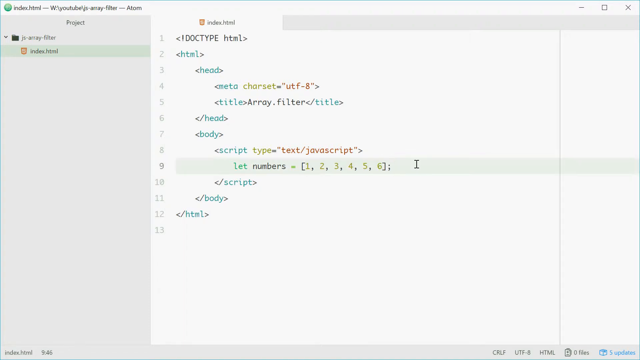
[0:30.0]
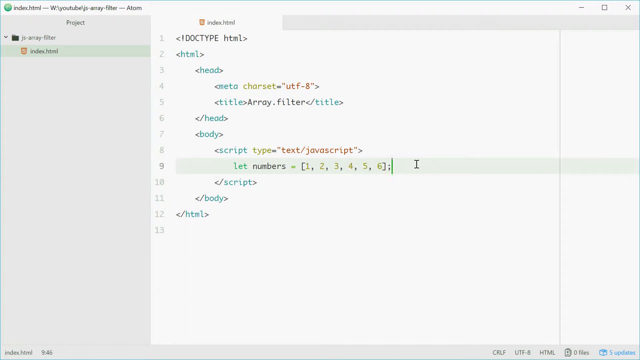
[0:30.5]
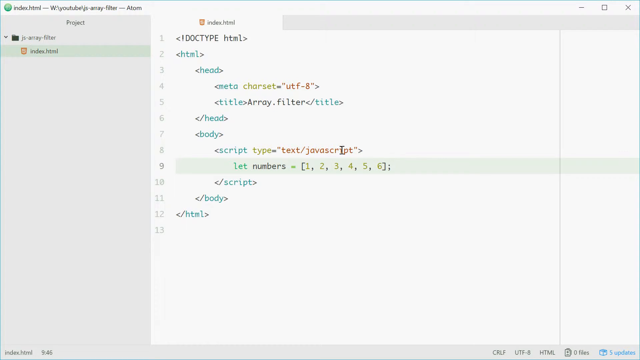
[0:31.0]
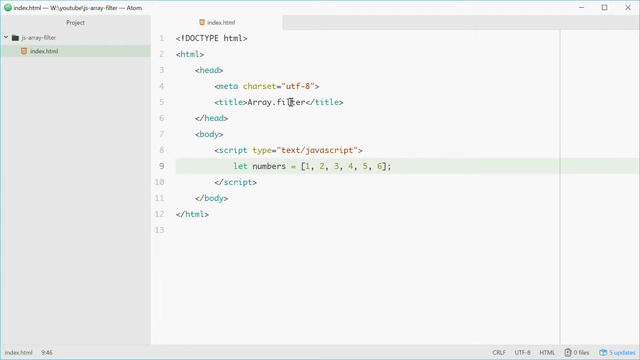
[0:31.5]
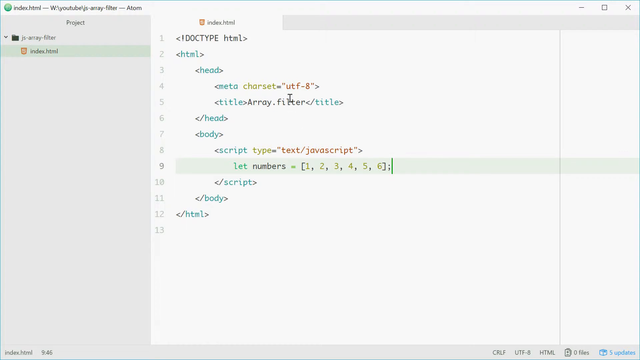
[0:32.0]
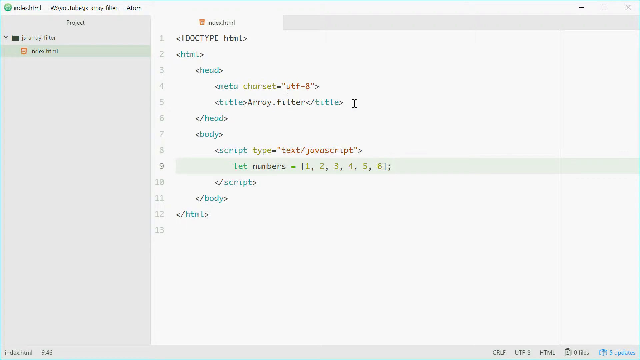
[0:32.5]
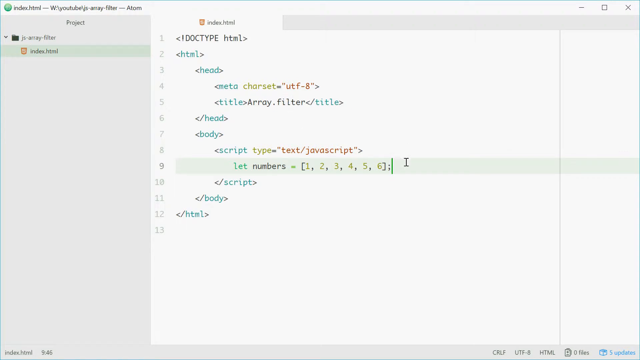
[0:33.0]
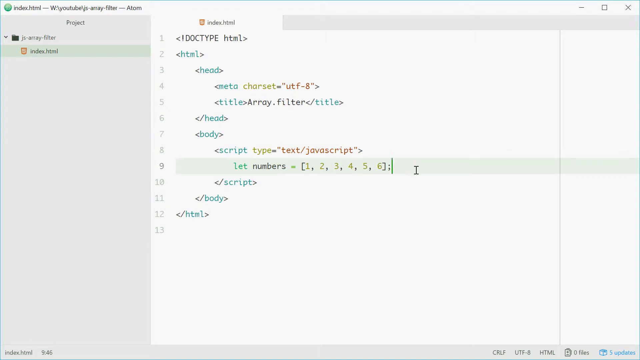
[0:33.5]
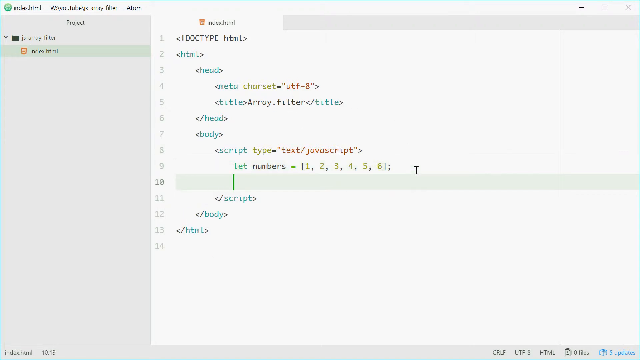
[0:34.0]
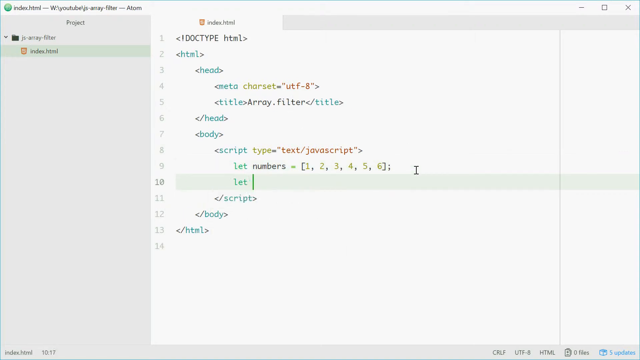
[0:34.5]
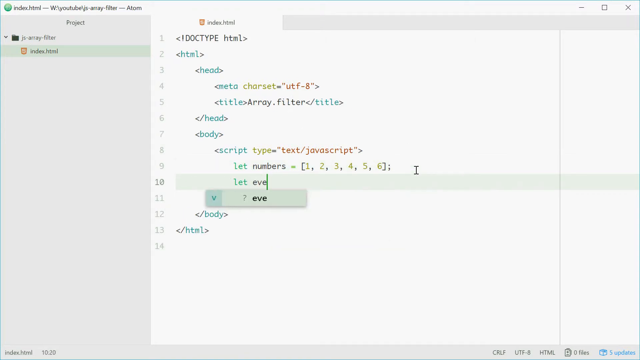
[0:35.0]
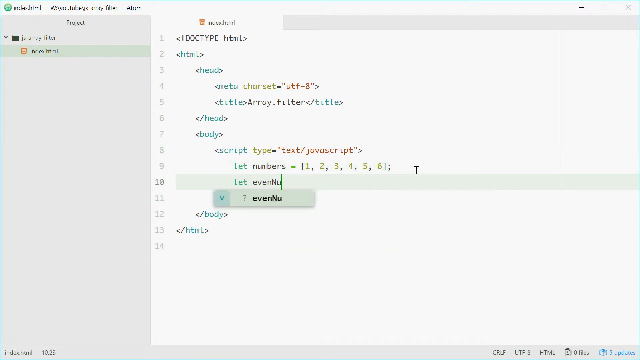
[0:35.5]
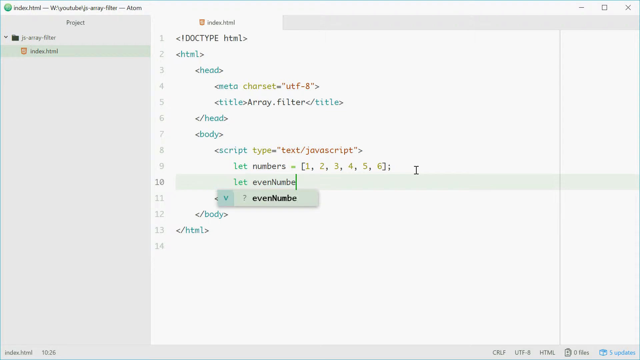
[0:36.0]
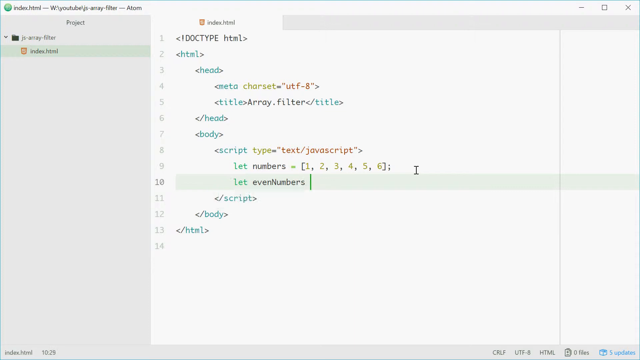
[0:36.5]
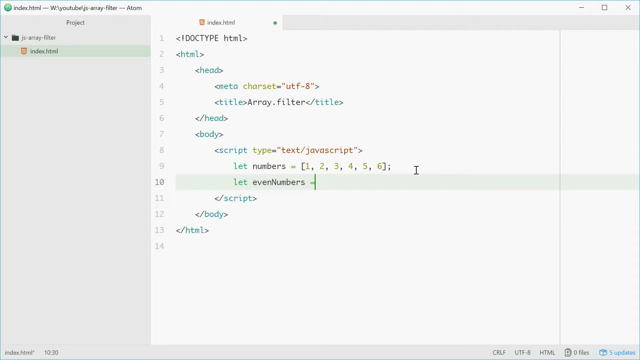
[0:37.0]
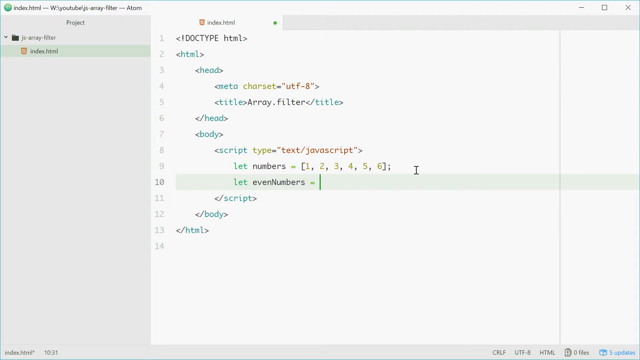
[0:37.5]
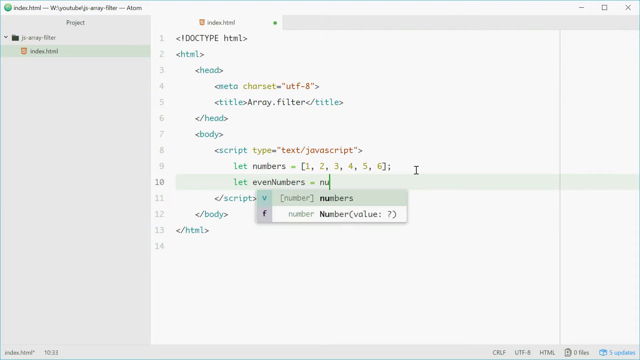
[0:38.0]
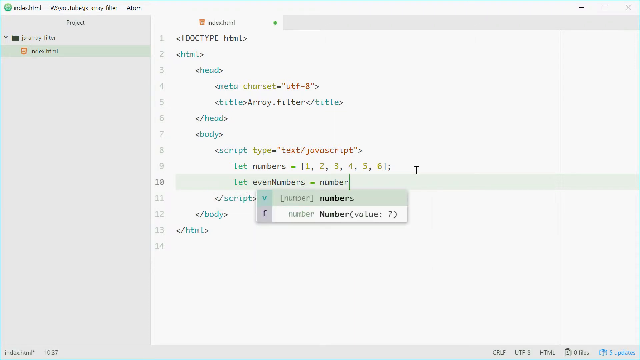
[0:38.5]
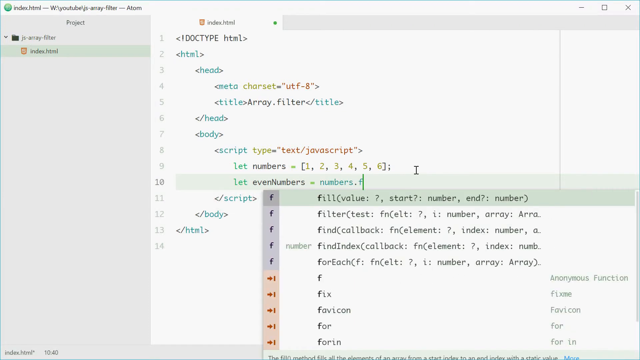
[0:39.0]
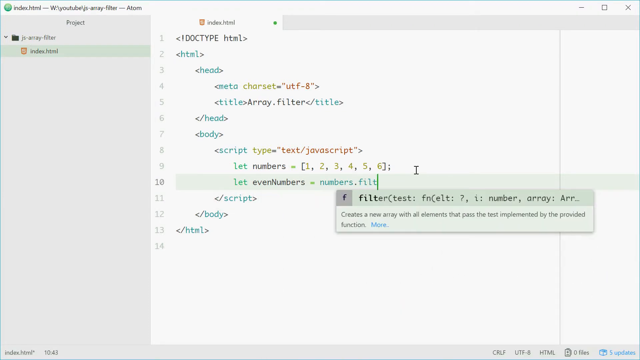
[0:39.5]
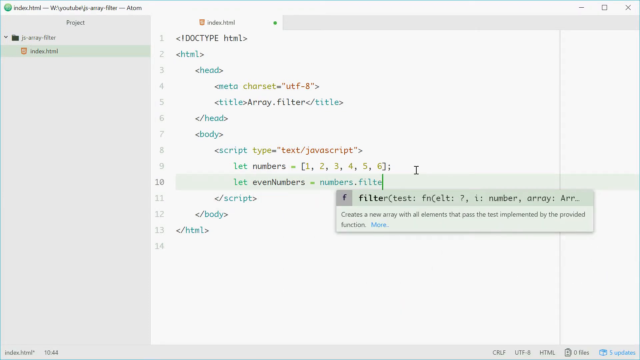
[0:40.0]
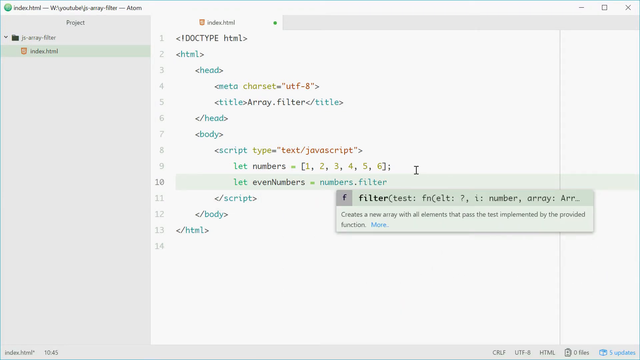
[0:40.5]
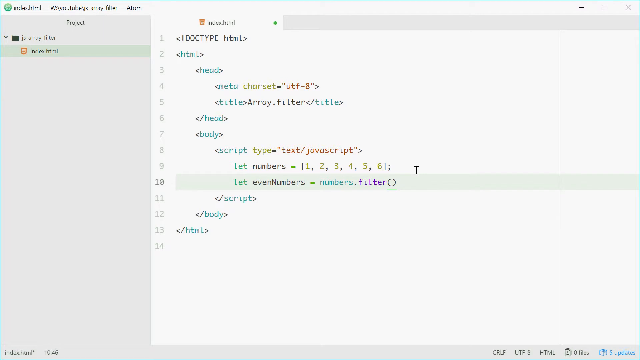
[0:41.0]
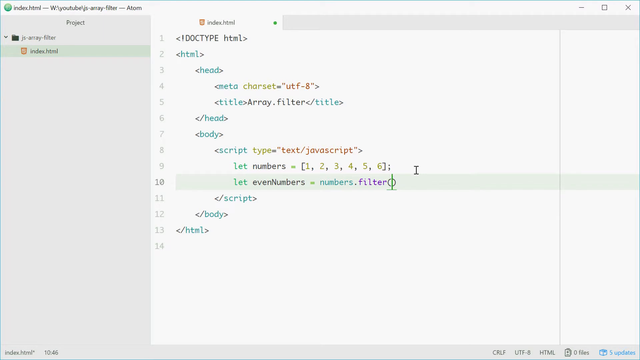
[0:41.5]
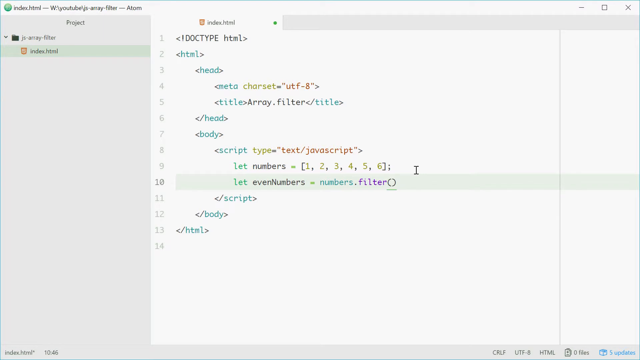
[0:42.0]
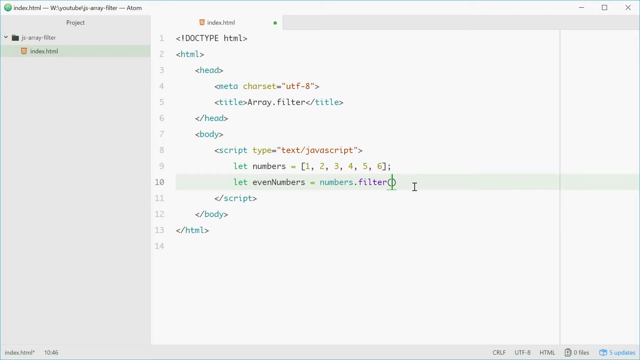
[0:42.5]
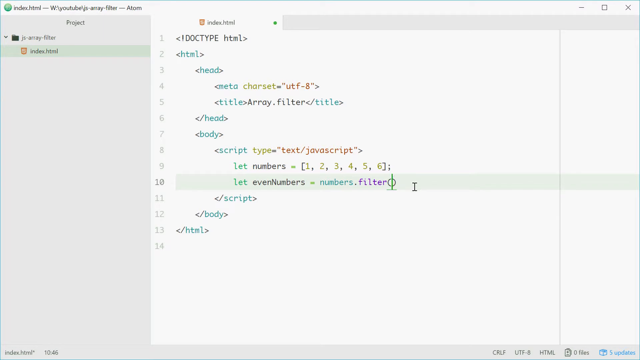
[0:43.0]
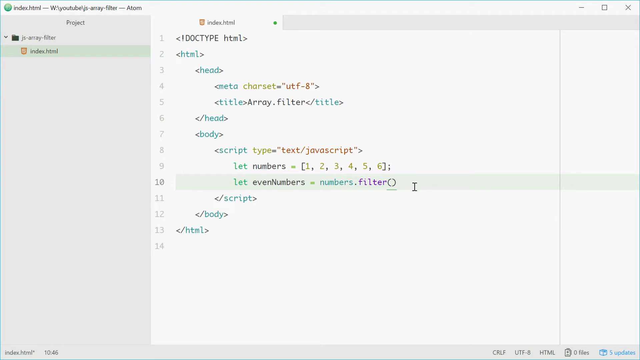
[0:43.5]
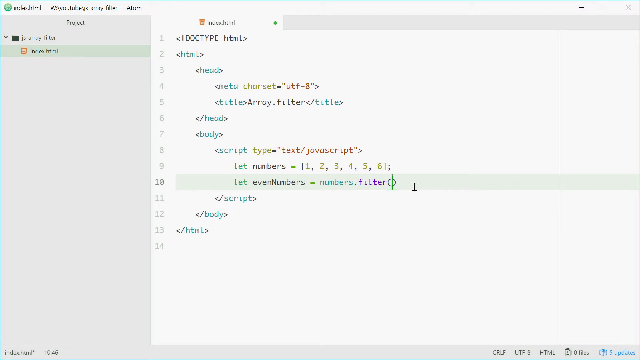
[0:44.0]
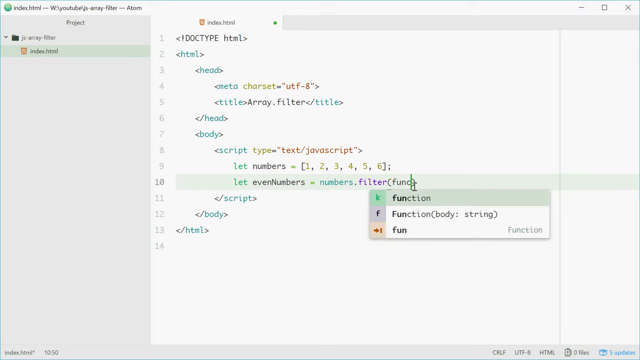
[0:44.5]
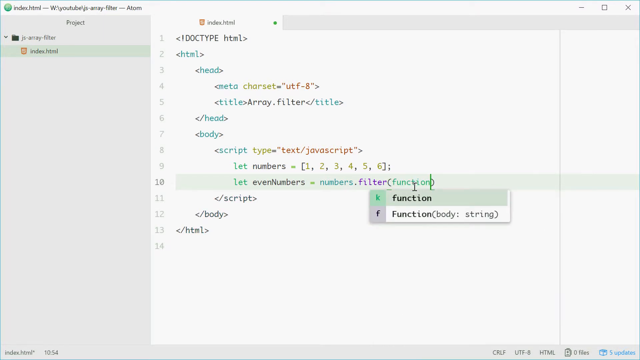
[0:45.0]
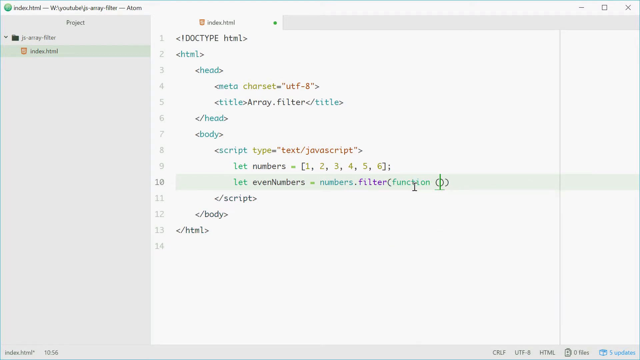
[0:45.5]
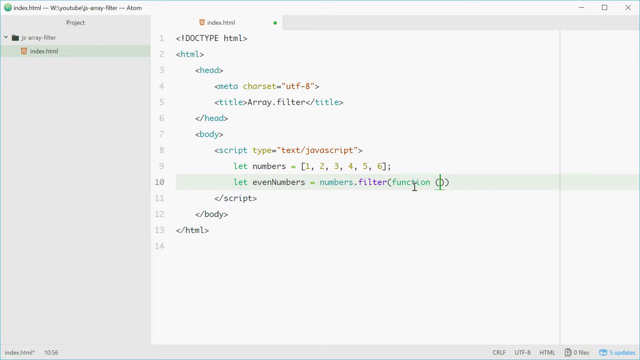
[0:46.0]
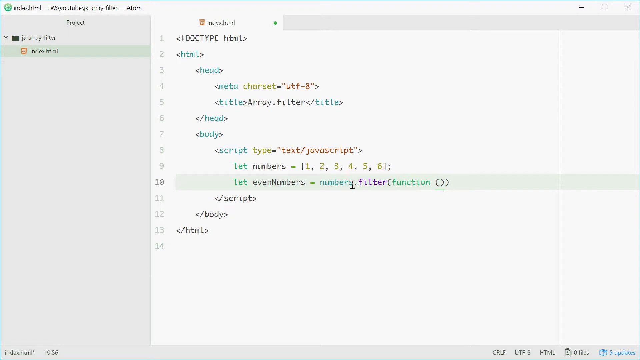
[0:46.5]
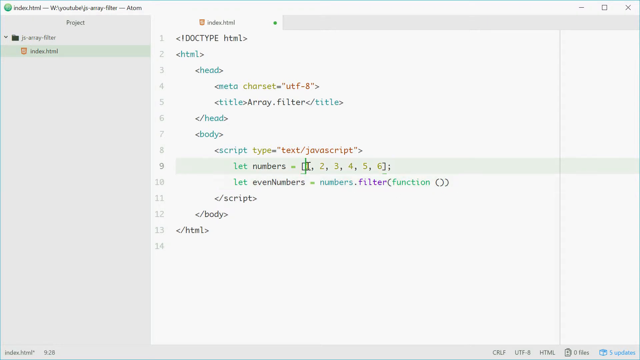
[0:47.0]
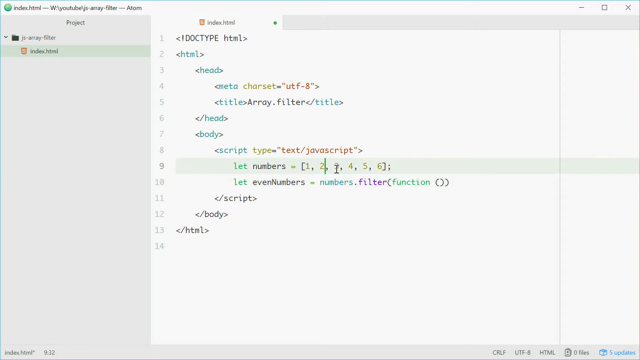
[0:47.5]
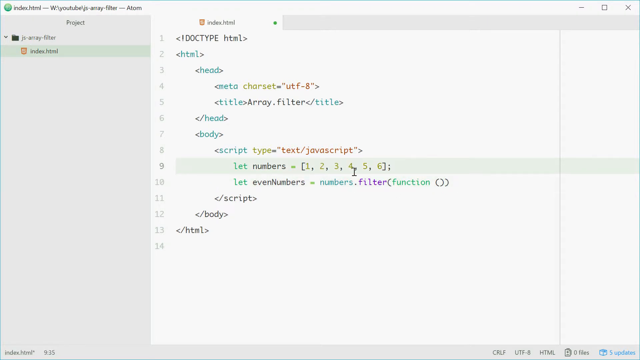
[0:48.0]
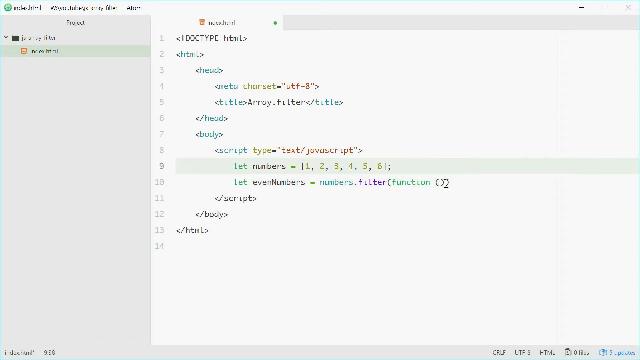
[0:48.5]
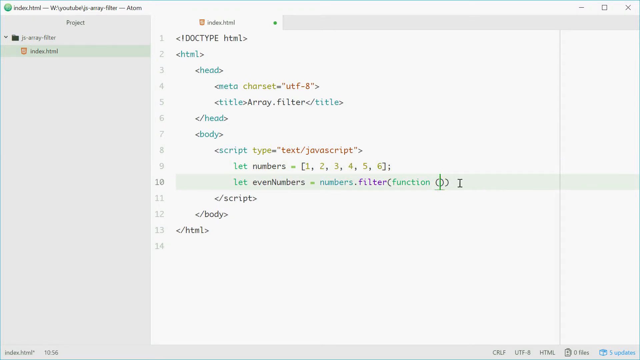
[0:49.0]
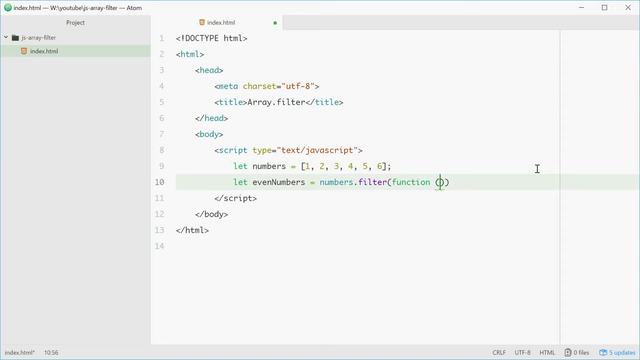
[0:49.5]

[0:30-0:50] The person finishes line 9 and moves on to line 10, typing "let evenNumbers = numbers.filter(function())", with "evenNumbers" written as one word. The word "let" is green, while words like "numbers" are black; "numbers.filter" is blue, then changes to purple after it is typed. The person enters a round bracket, types "function", and adds another round bracket inside it. In line 9 the numbers 1 through 6 are yellow; "filter" is purple, "numbers." is blue, and "function" is a turquoise green.